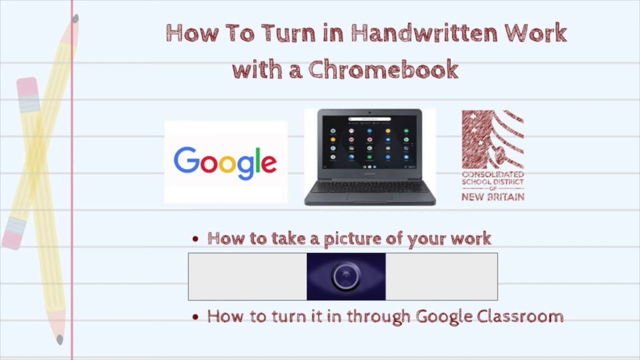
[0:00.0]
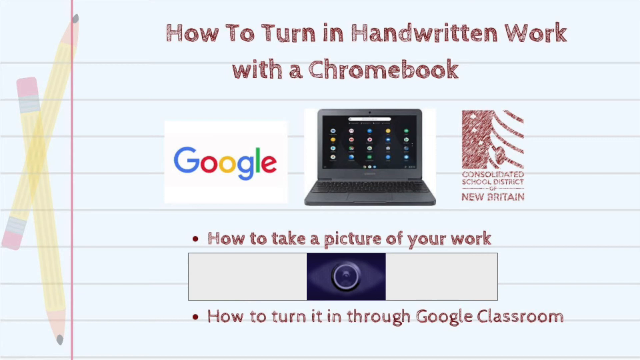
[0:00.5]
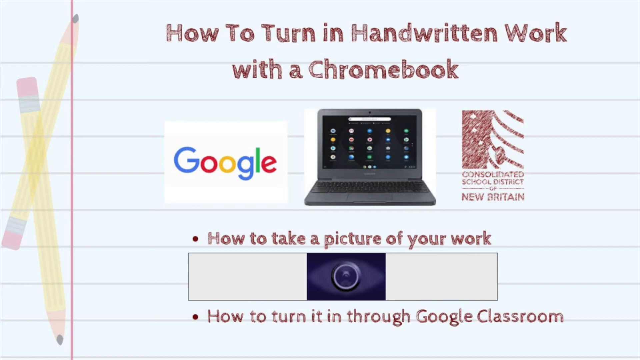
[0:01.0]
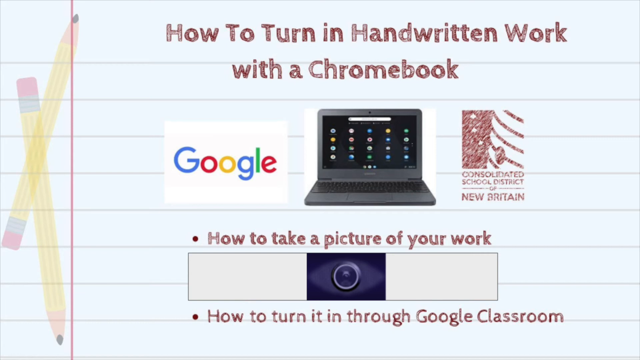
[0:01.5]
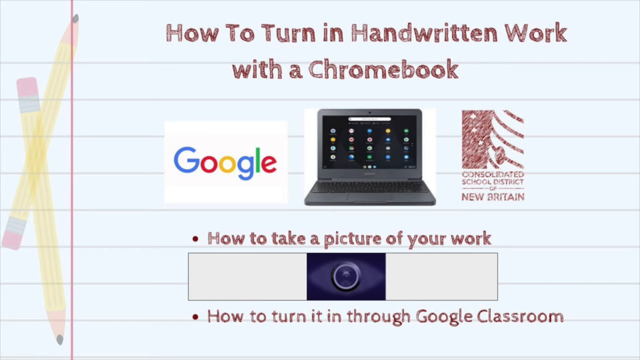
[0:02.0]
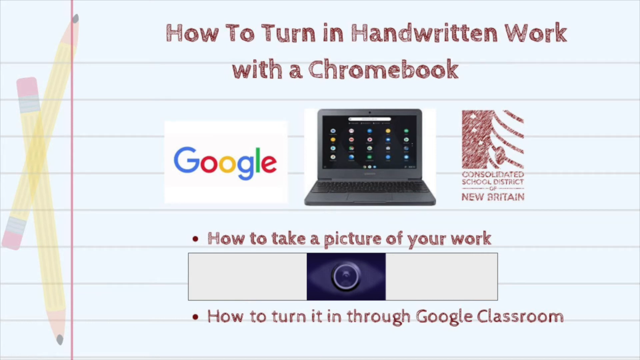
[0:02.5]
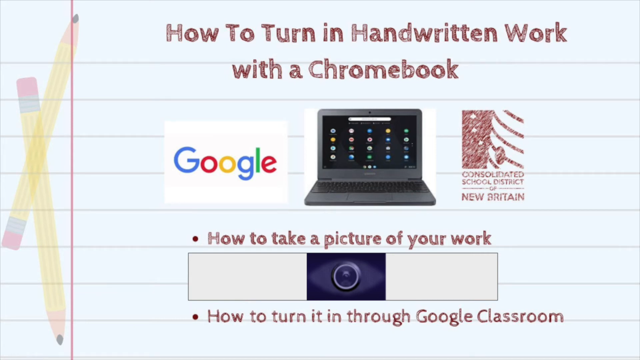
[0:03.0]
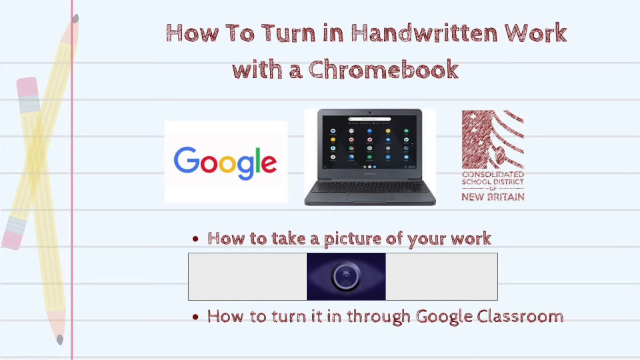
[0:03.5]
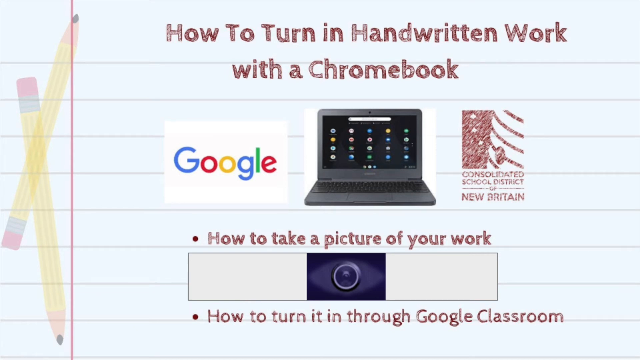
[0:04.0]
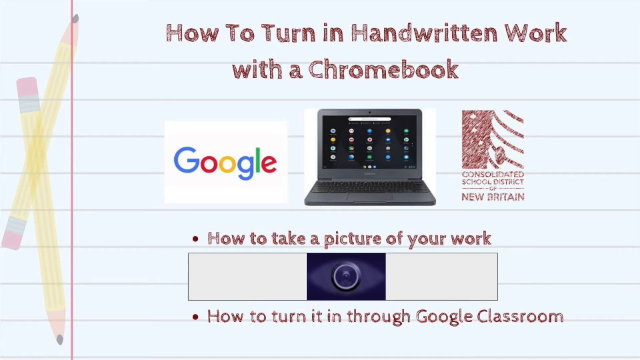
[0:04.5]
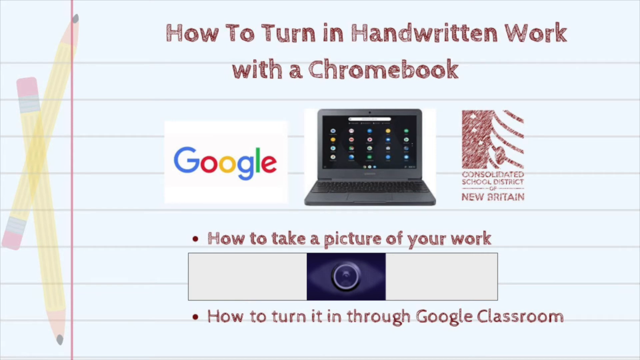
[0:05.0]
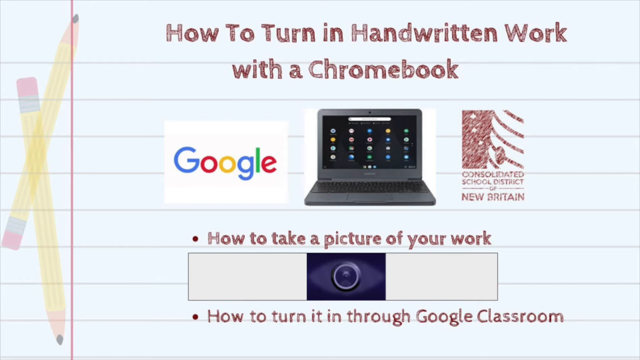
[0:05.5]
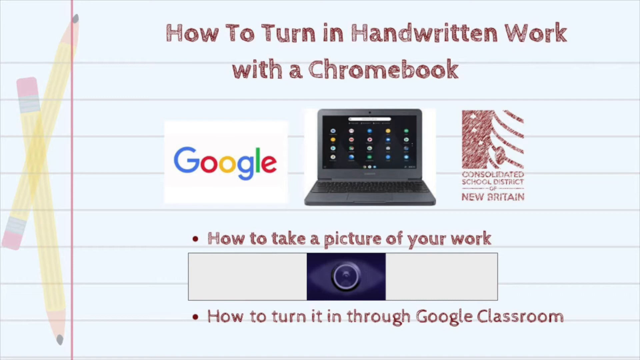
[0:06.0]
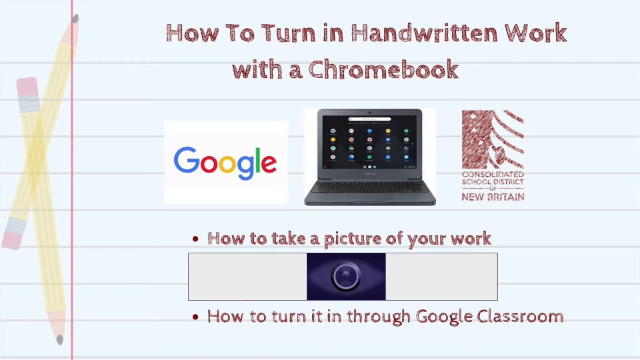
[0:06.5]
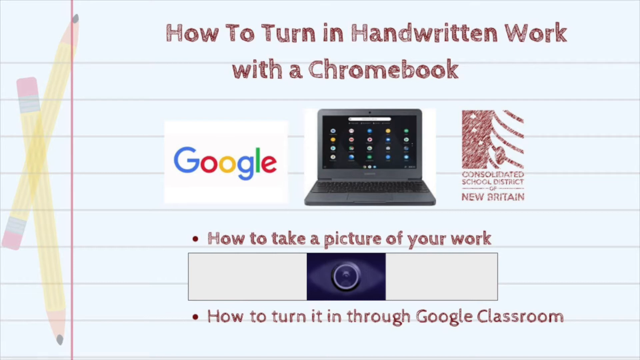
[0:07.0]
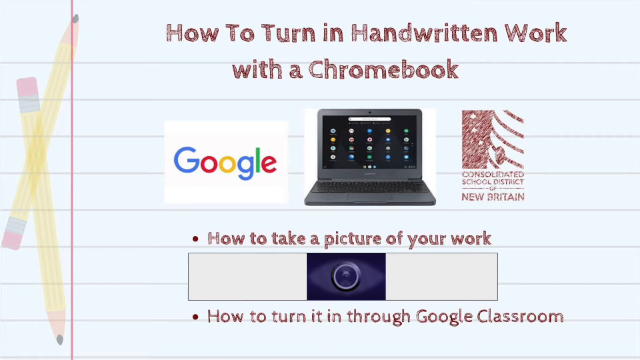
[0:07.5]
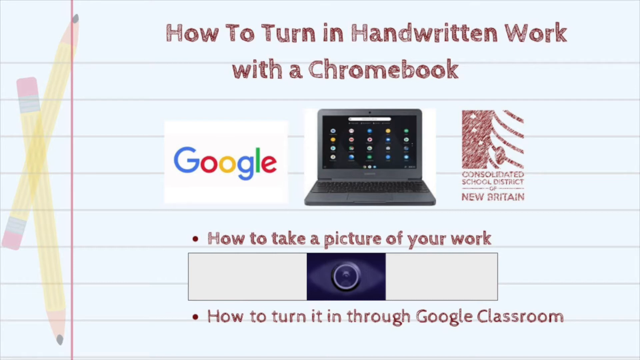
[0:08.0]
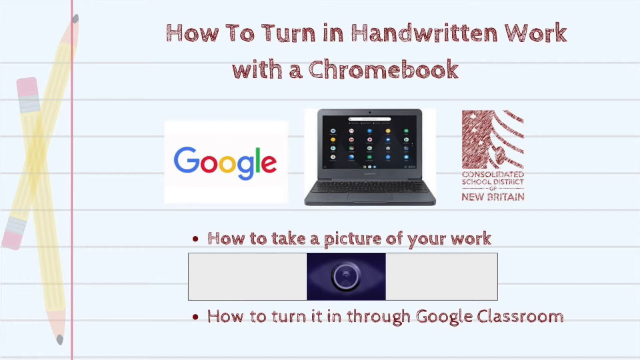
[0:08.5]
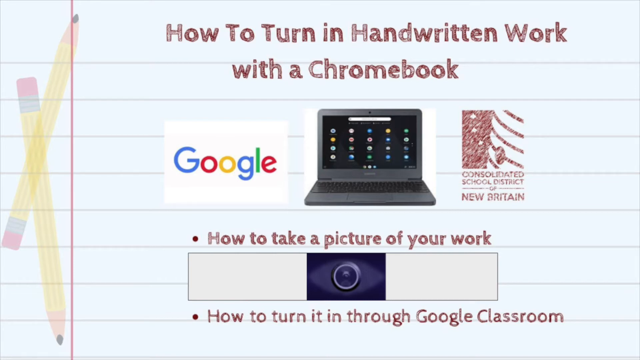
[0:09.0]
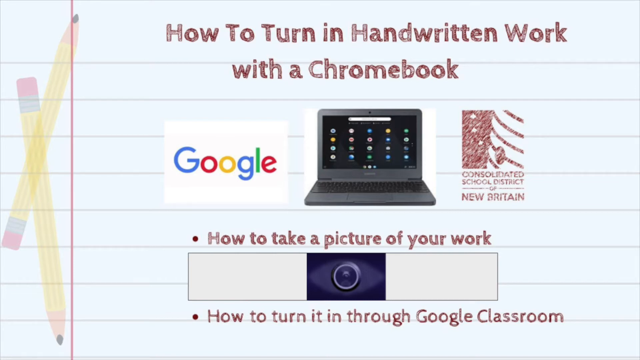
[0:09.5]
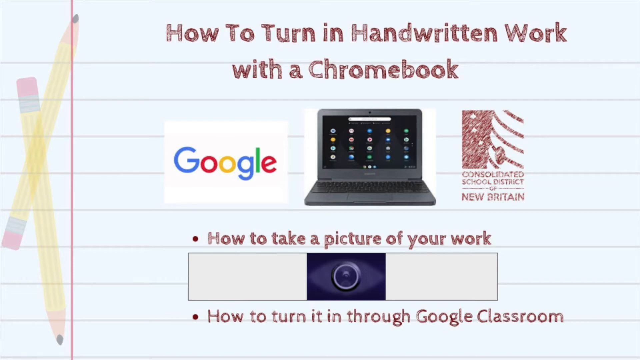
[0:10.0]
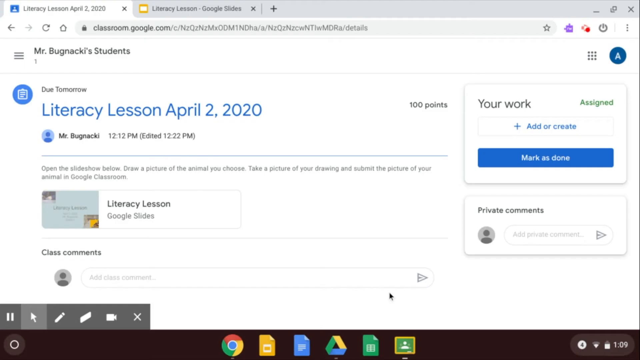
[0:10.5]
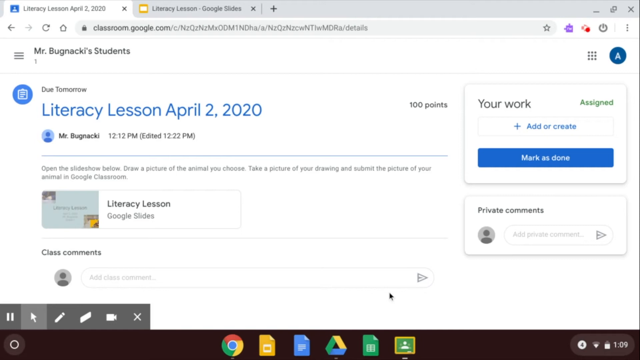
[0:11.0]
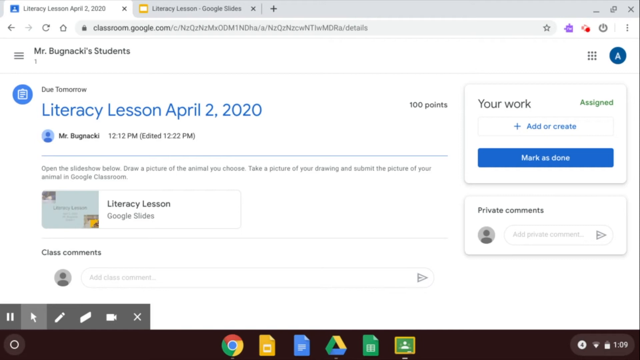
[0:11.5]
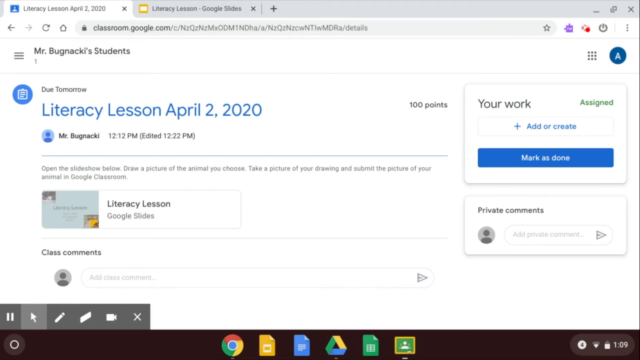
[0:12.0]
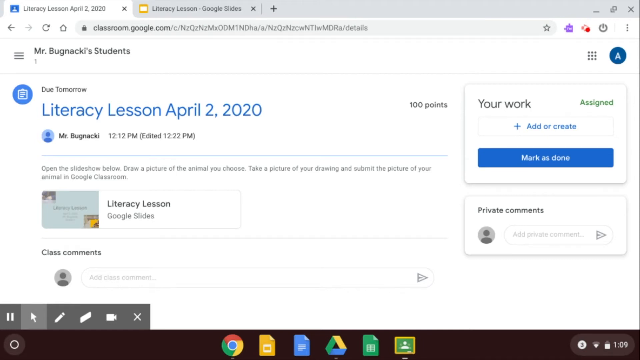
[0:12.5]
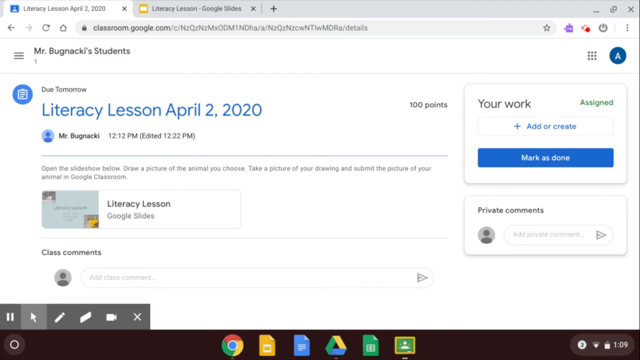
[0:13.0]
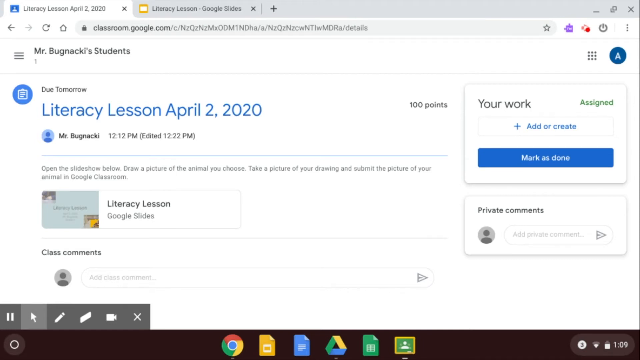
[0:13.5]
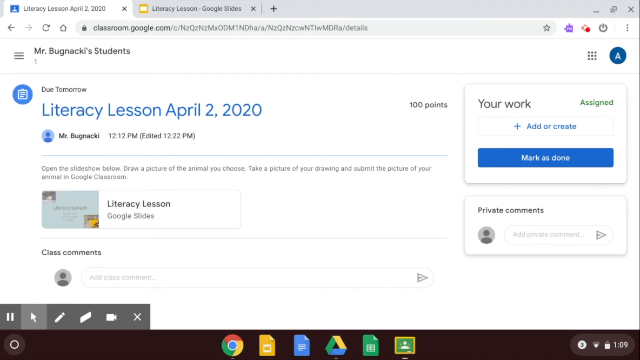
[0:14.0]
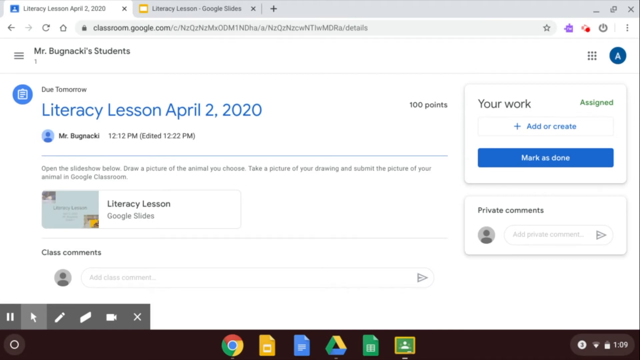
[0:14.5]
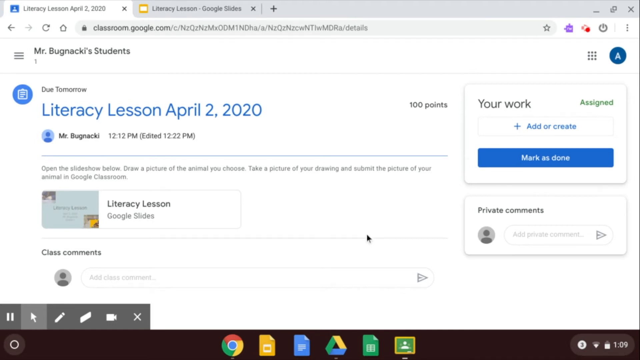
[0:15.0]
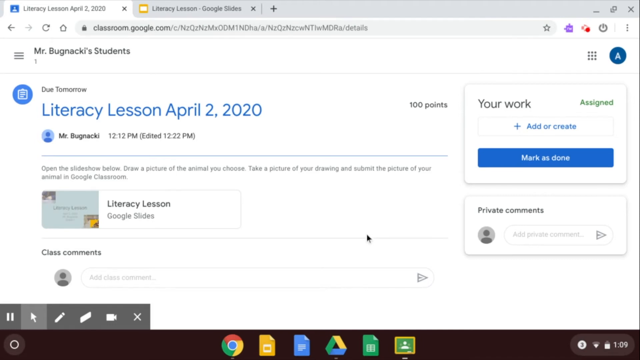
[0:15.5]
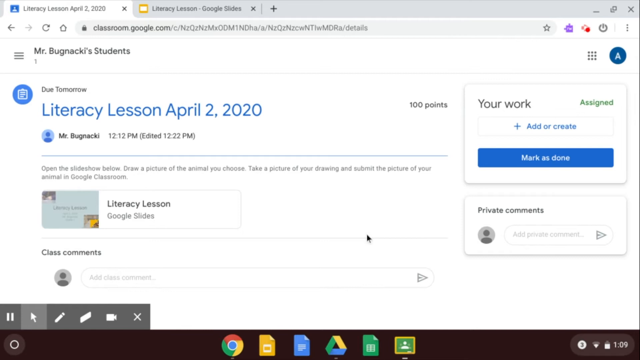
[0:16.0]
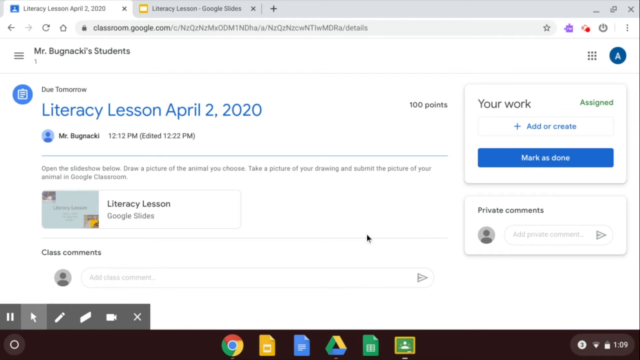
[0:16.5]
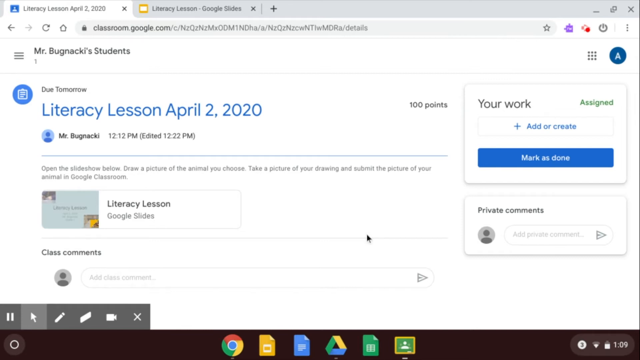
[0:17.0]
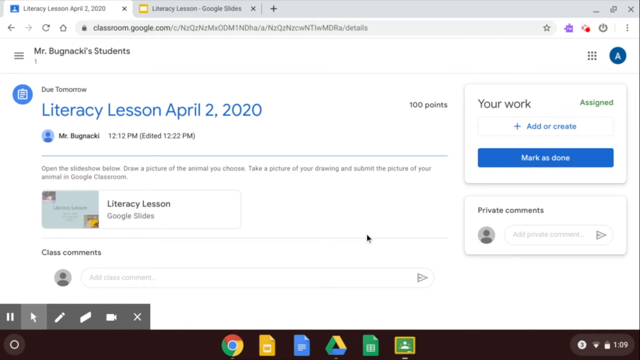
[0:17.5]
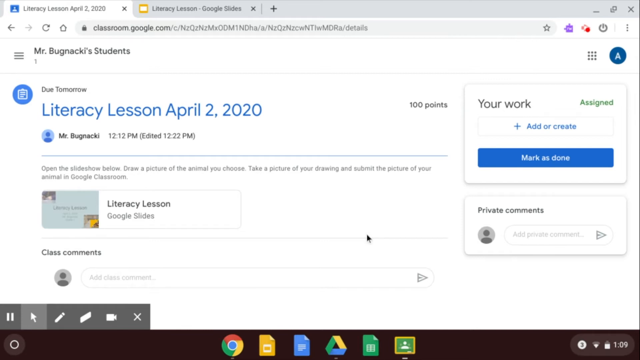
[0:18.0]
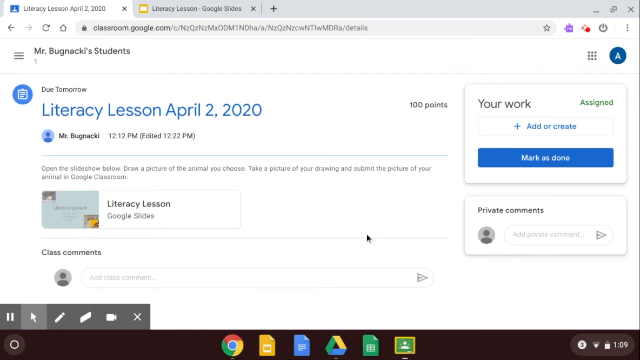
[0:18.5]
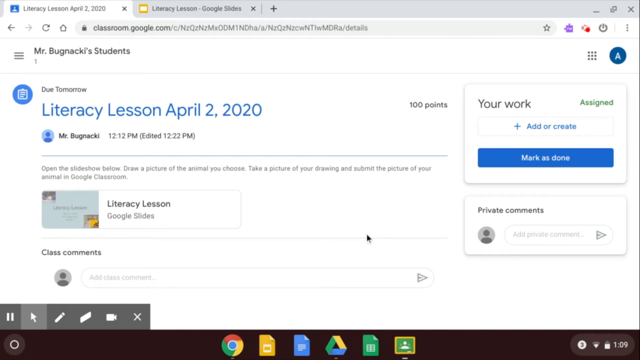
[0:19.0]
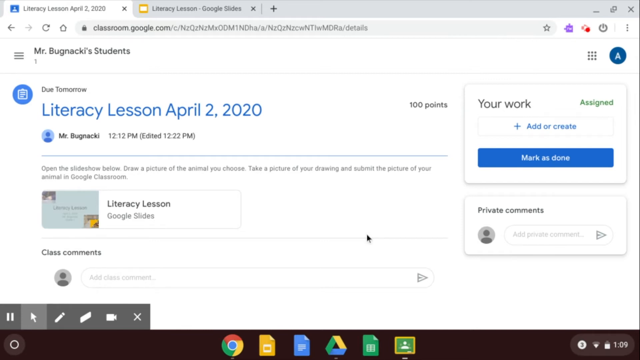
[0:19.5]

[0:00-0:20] A computer demonstration on how to turn in handwritten work with a Chromebook begins, with those words written in brown at the top of the screen. In the middle of the screen is a picture of an open Chromebook. To the right of this picture are brown words reading "Consolidated School District, New Britain," and to the left is a Google logo. At the bottom of the Chromebook is a white monitor with a black camera on it. Above this monitor, "how to take a picture of your work" is written in brown, and below it are the words "how to turn it in through Google Classroom" in brown. Just next to the Google logo are two yellow pencils with pink erasers. The demonstrator then goes on to Google Classroom, where a page titled "Literacy Lesson April 2, 2020" is open.